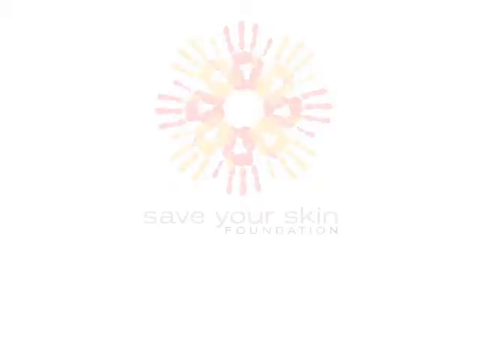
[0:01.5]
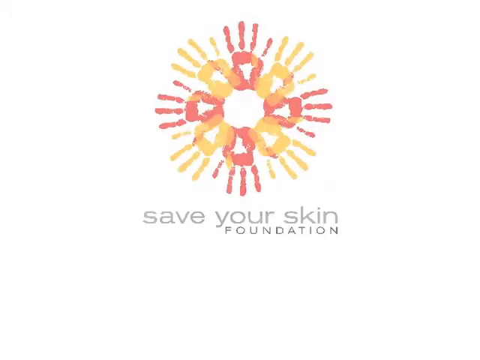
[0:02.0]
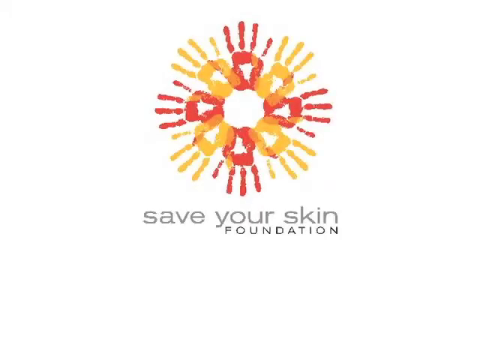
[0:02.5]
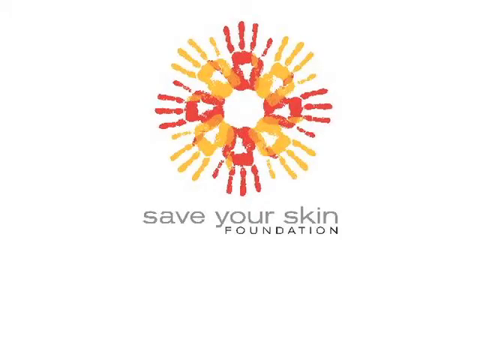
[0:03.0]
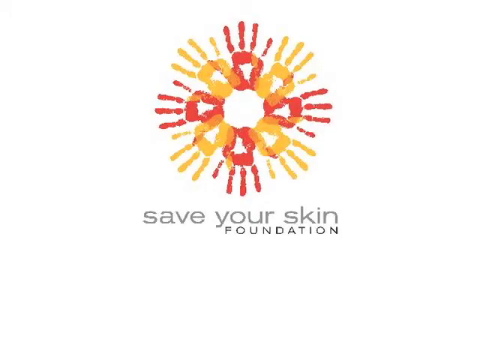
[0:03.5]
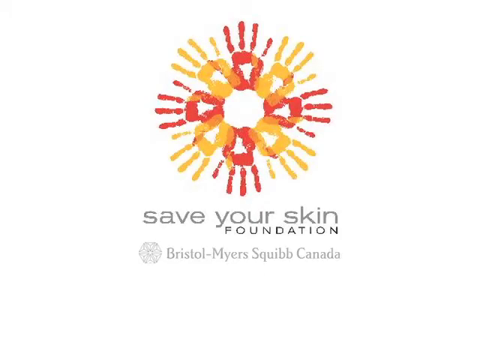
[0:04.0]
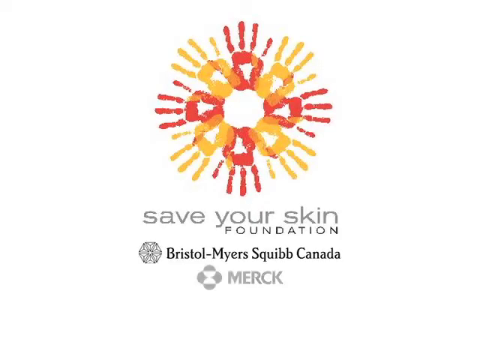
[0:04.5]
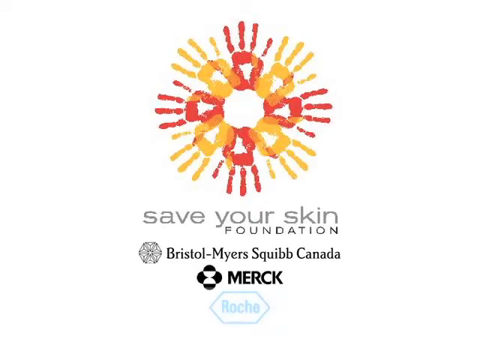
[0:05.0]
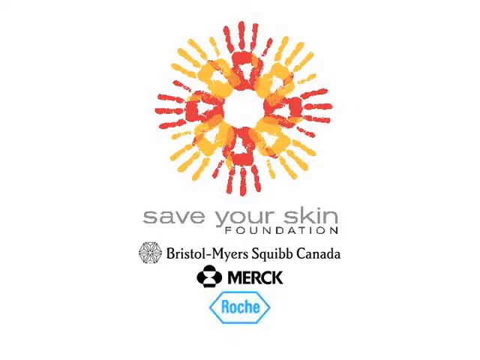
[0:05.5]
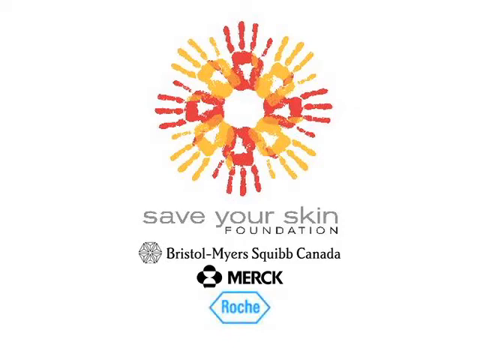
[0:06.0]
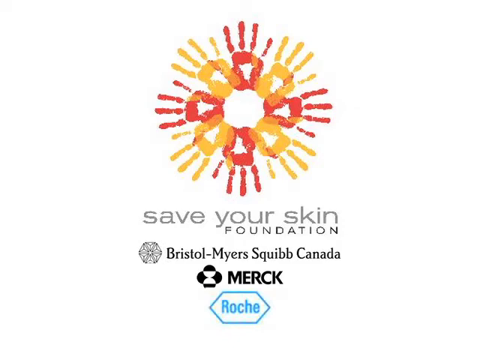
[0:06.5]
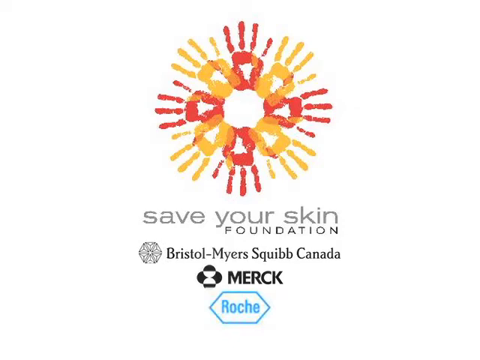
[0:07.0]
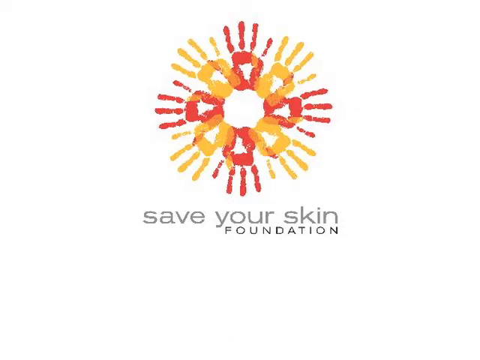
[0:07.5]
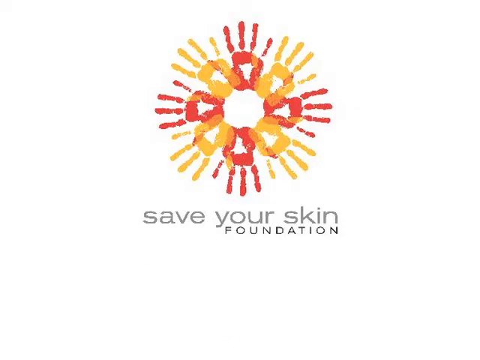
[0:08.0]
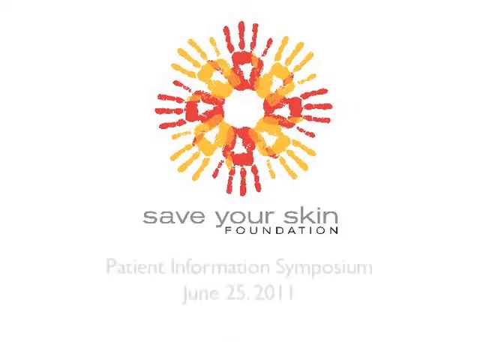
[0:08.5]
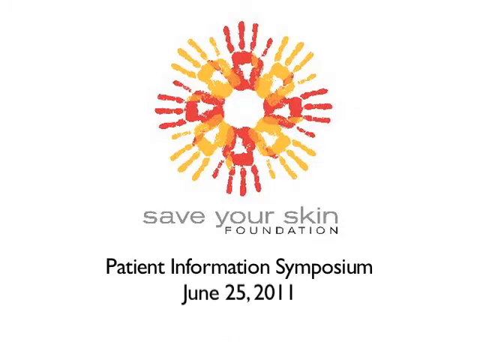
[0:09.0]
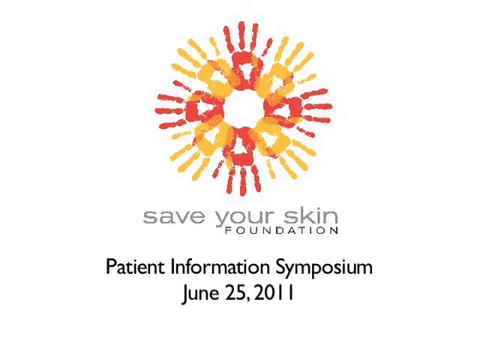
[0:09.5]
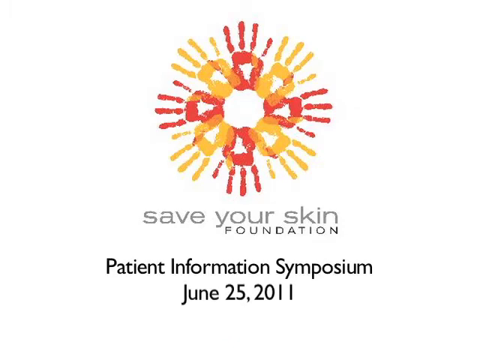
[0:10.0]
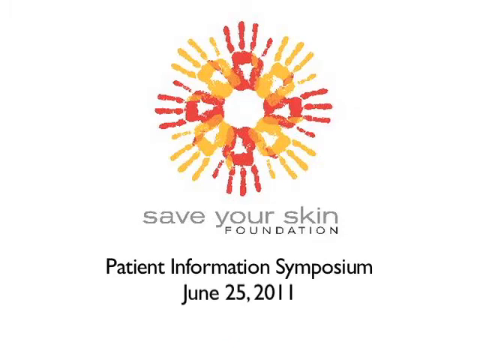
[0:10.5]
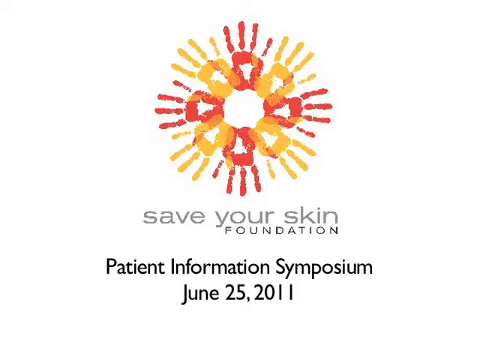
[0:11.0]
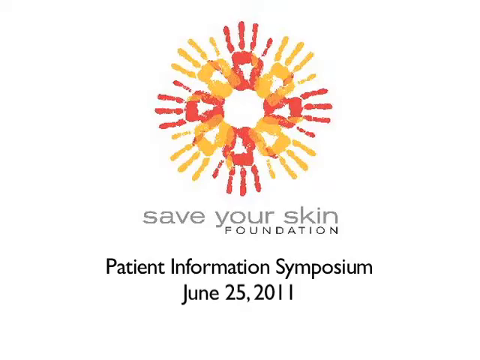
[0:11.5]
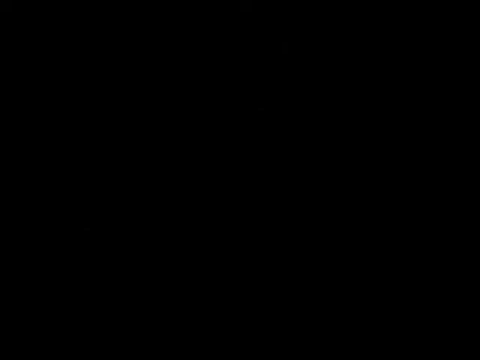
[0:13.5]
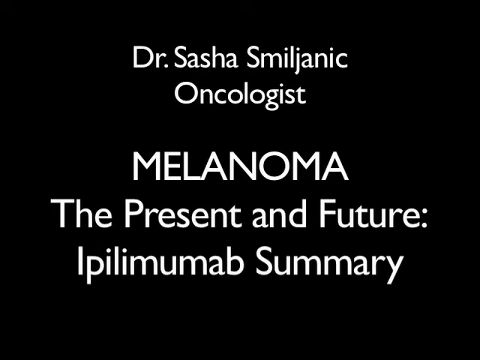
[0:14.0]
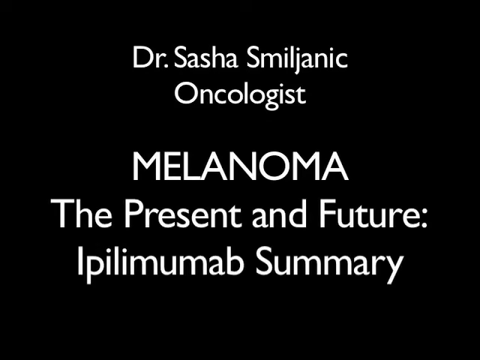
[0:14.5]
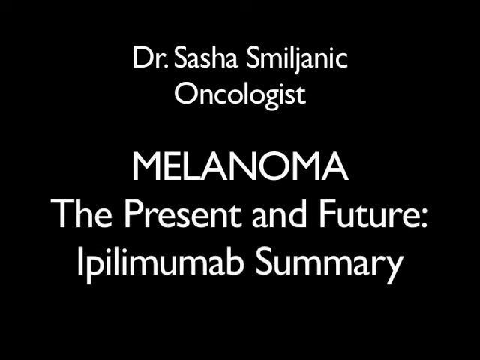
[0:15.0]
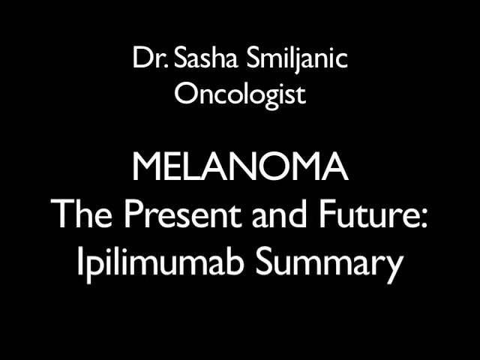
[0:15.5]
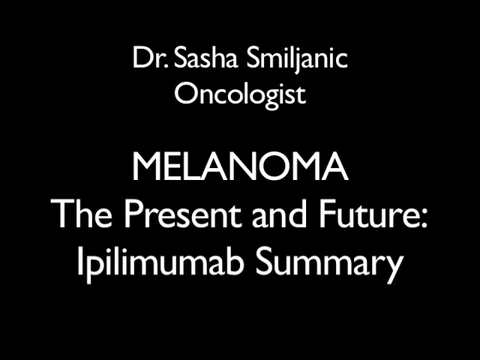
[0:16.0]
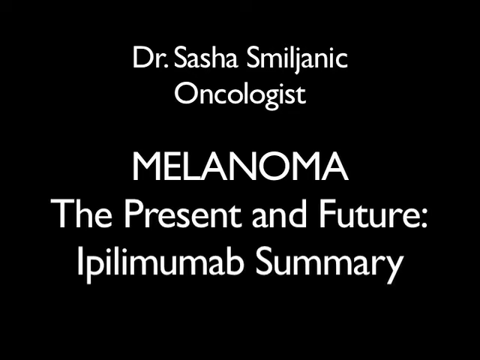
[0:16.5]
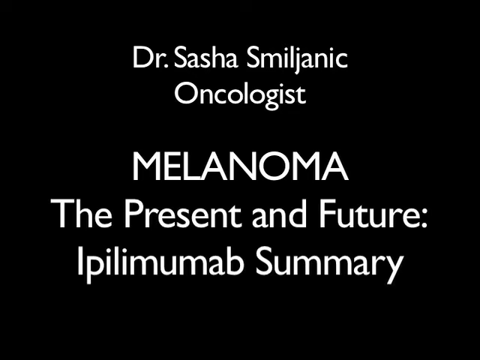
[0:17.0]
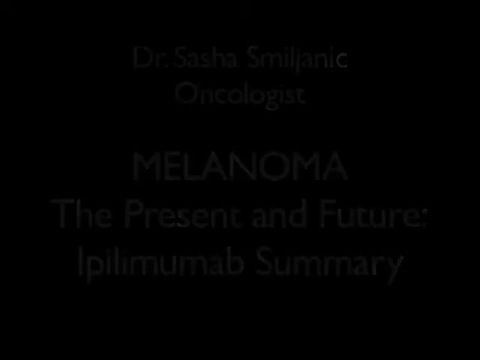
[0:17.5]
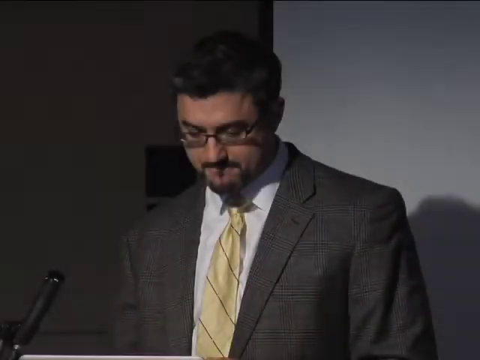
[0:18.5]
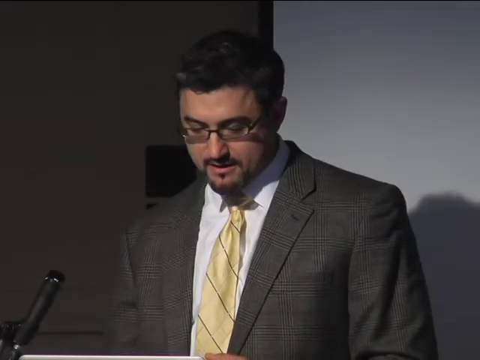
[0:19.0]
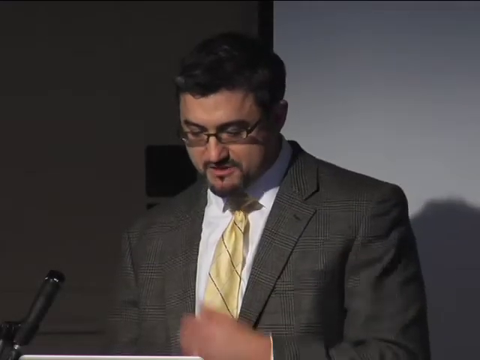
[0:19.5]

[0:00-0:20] The video opens on a white screen with grey text reading "save your skin foundation." Above the text is an image made of handprints in alternating yellow and red paint, arranged in a circle with the palms facing toward the center so that they form the shape of a flower. More text then appears at the bottom of the screen: "Bristol Myer Squibb Canada," "Merck" and "Roche." The text changes to "patient information symposium June 25th 2011." The screen fades to black, and white text appears: "Dr. Sasha Smiljanic oncologist" and "melanoma the present and future epilimumab summary." The scene then changes to a man, the doctor giving the talk, standing behind a microphone. He wears a brown suit jacket, a white shirt and a yellow tie, and he has a goatee beard and glasses. He reaches up with his left hand, clenched in a fist, and grasps his nose between his thumb and forefinger.